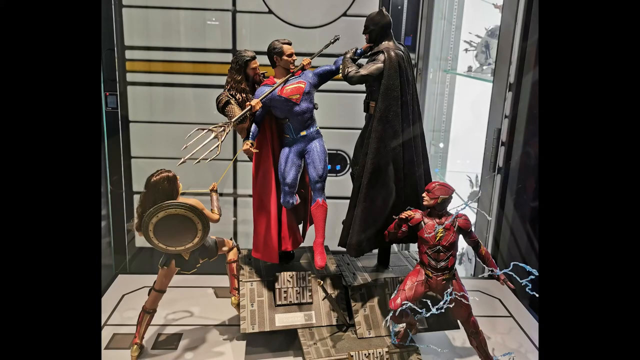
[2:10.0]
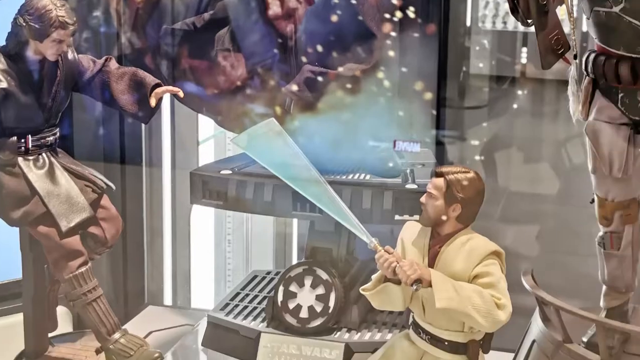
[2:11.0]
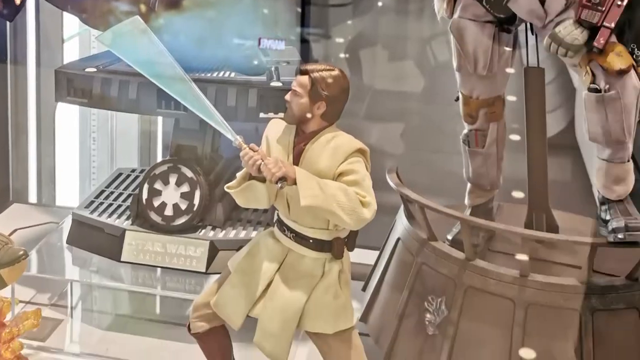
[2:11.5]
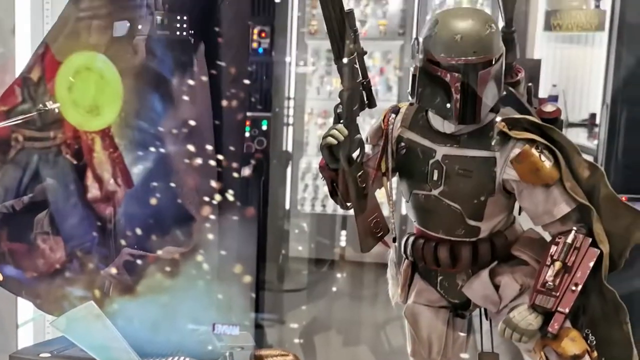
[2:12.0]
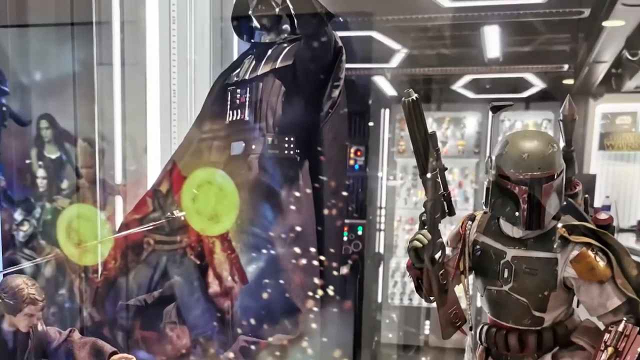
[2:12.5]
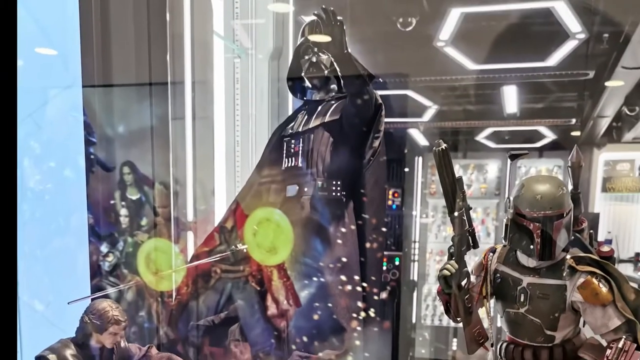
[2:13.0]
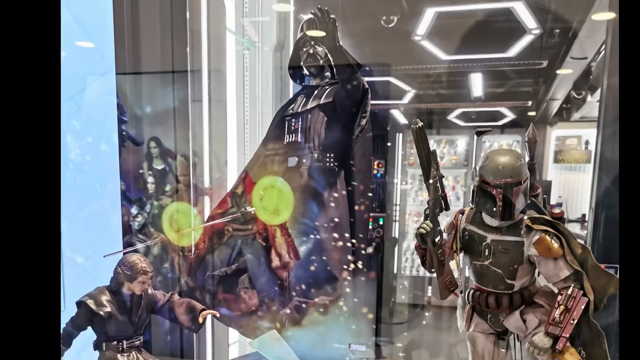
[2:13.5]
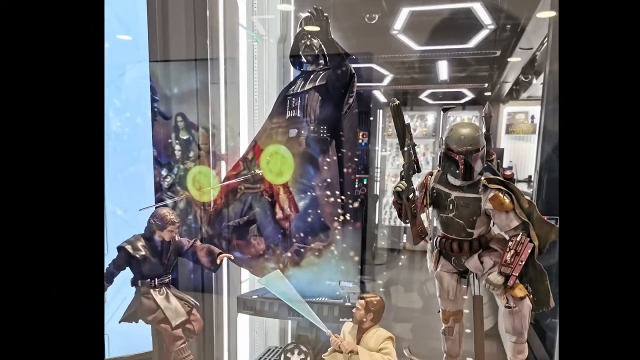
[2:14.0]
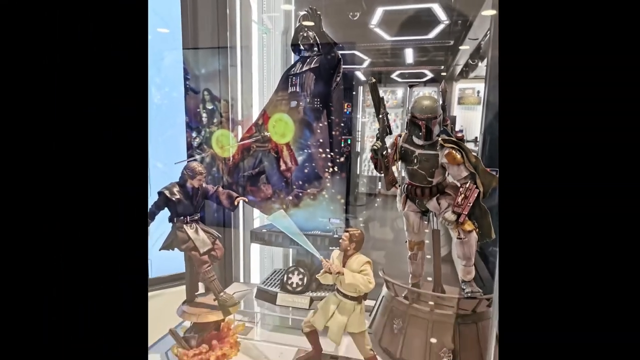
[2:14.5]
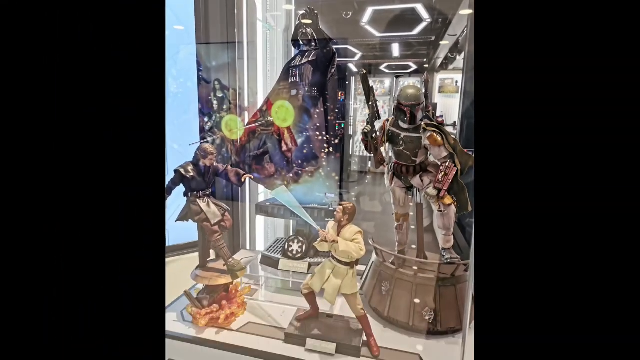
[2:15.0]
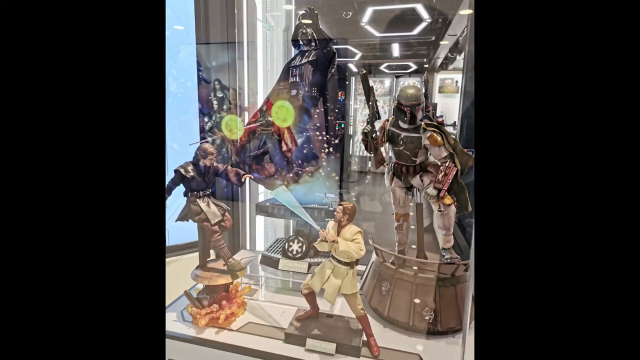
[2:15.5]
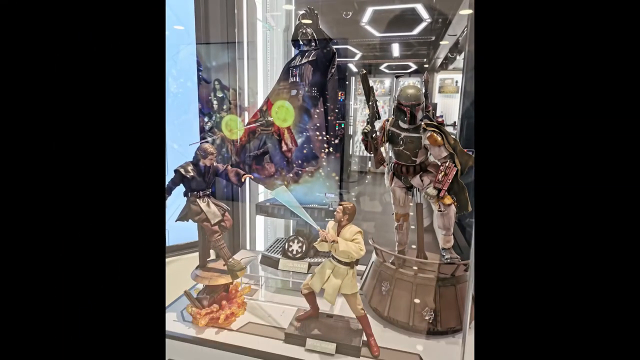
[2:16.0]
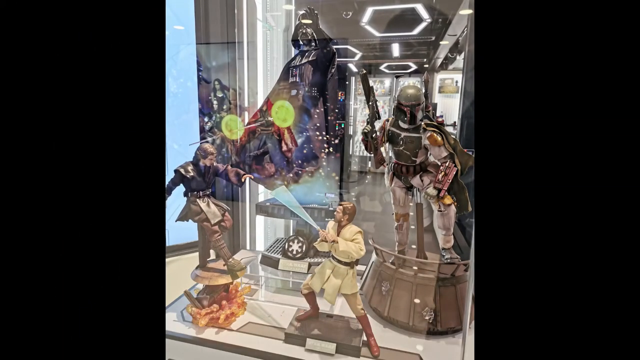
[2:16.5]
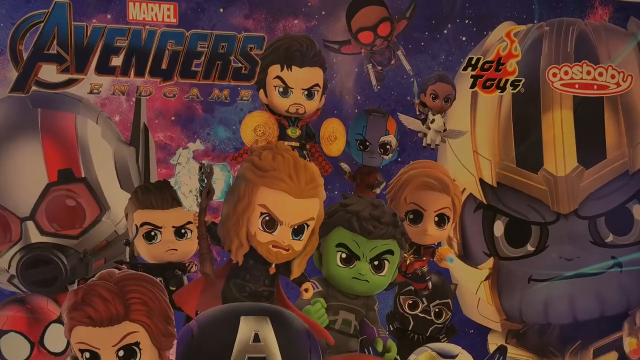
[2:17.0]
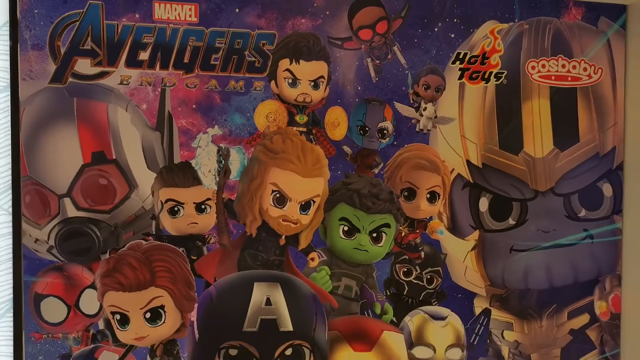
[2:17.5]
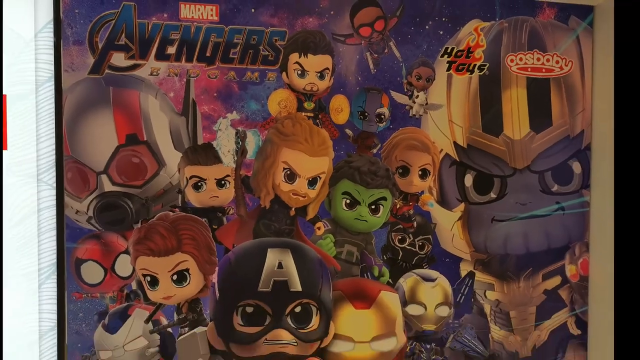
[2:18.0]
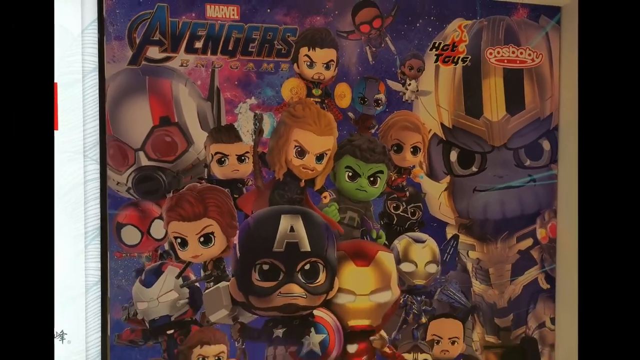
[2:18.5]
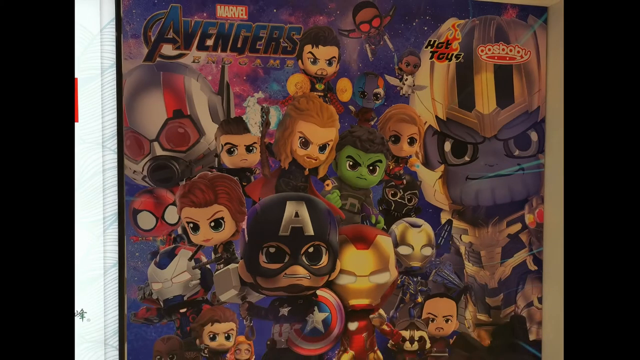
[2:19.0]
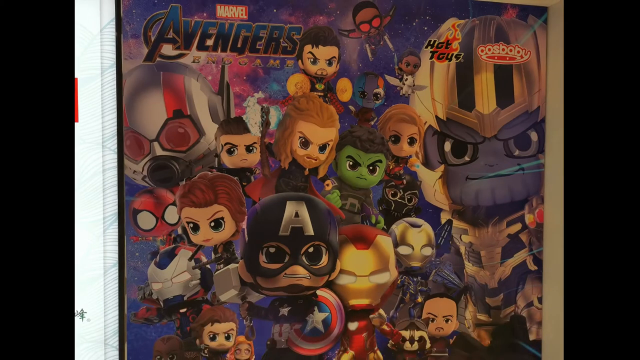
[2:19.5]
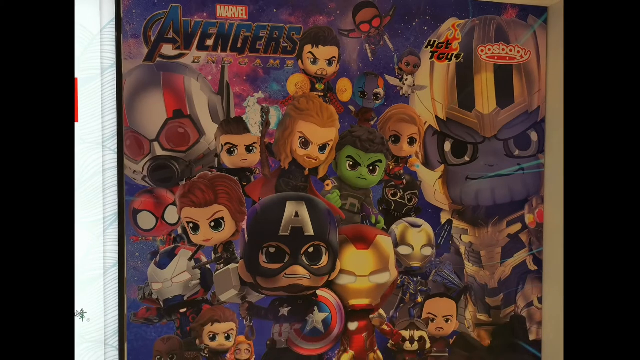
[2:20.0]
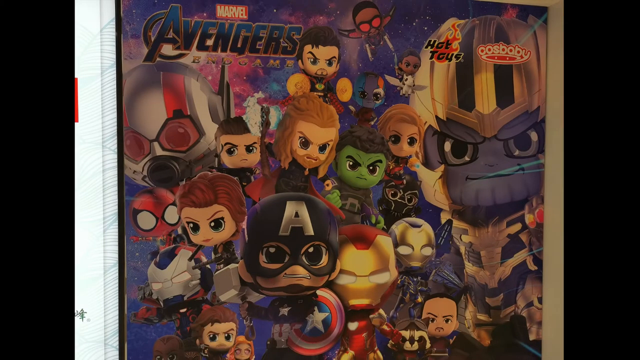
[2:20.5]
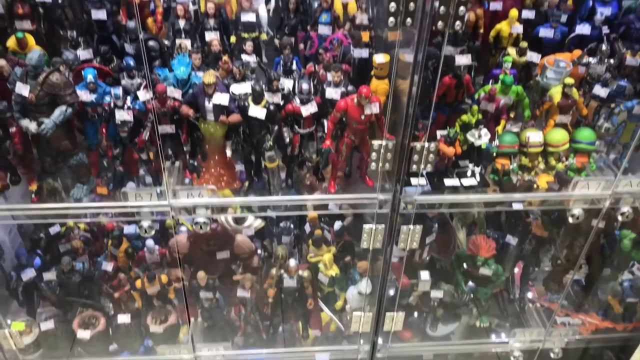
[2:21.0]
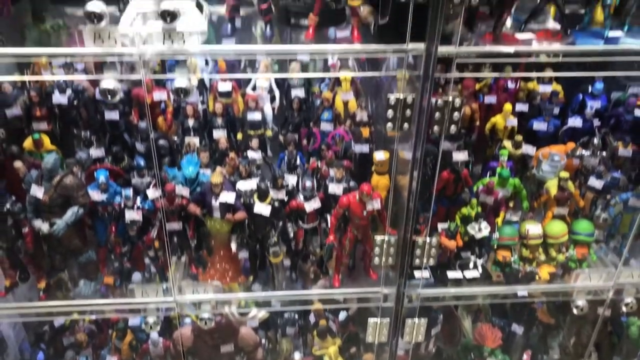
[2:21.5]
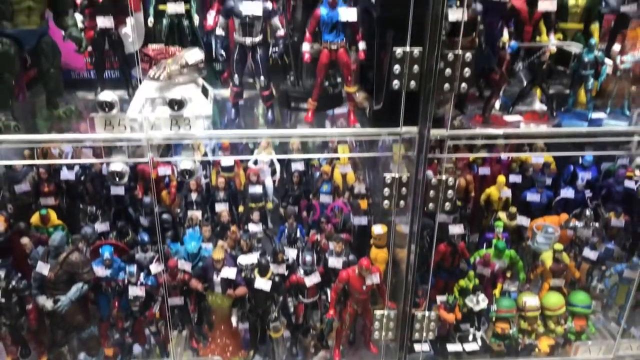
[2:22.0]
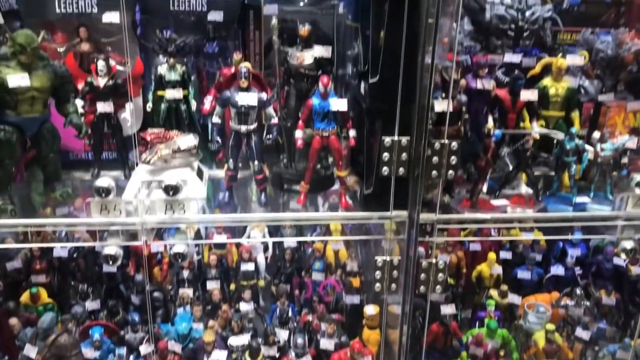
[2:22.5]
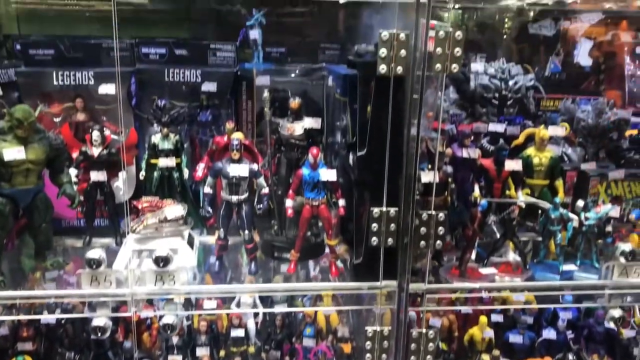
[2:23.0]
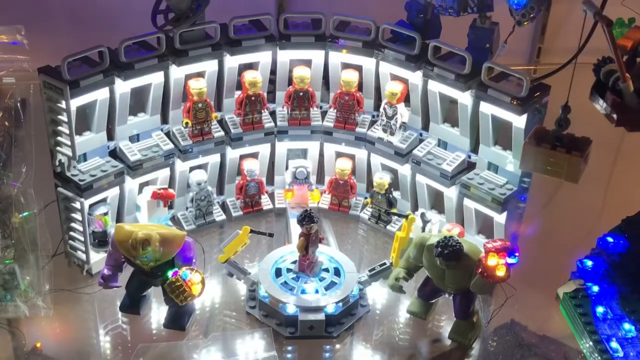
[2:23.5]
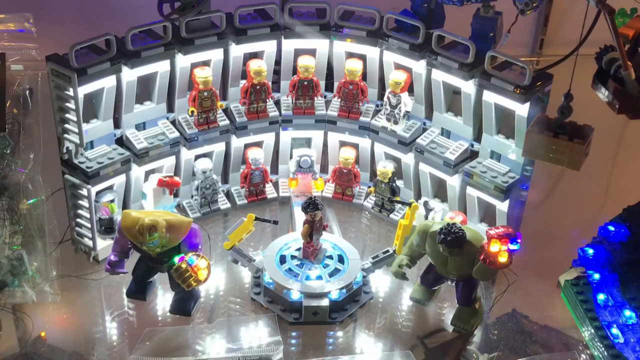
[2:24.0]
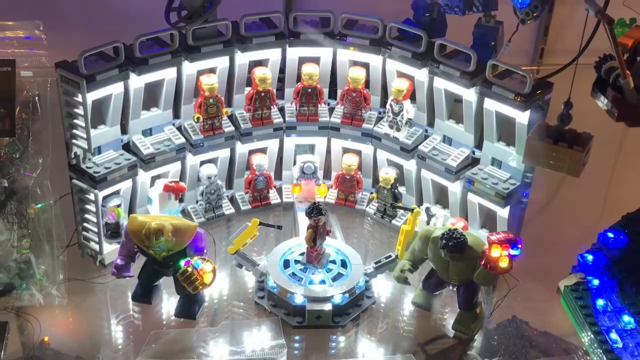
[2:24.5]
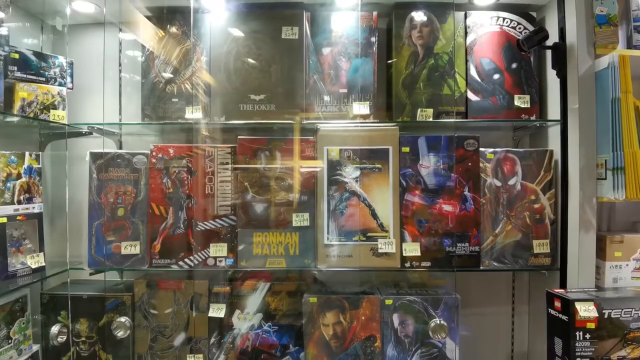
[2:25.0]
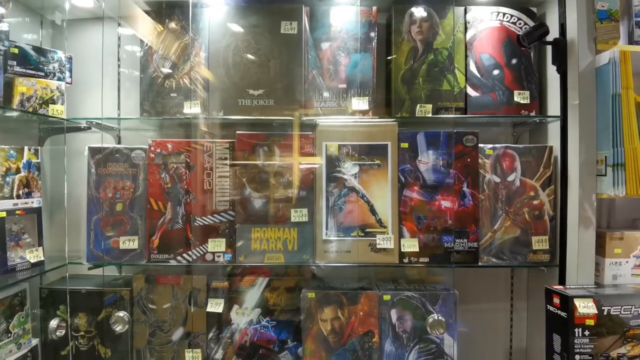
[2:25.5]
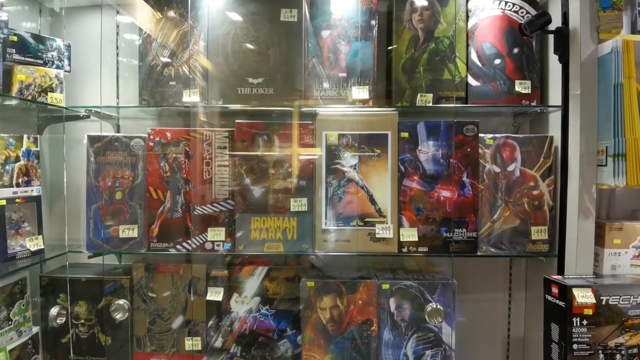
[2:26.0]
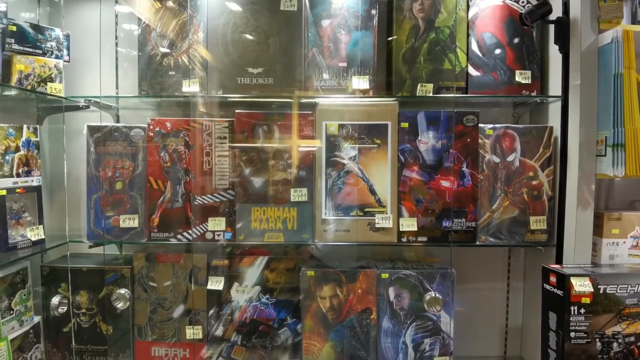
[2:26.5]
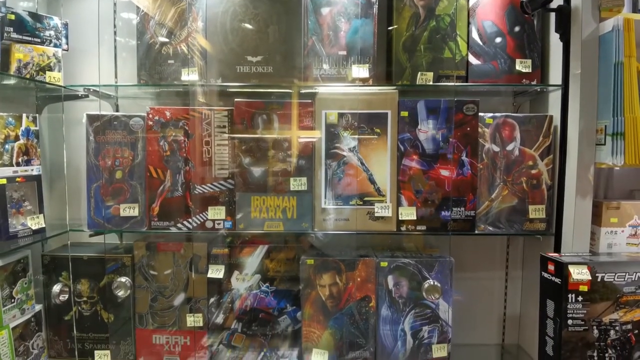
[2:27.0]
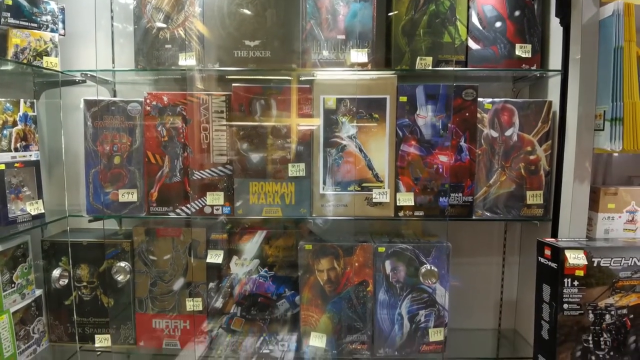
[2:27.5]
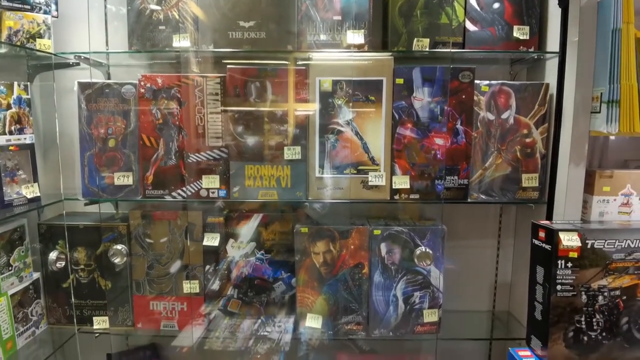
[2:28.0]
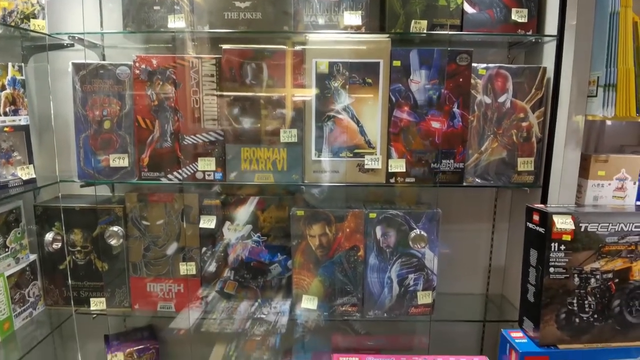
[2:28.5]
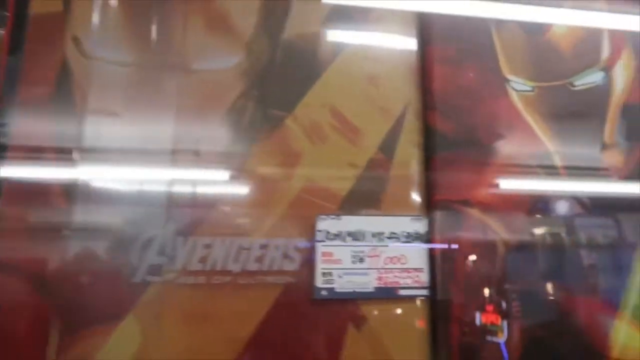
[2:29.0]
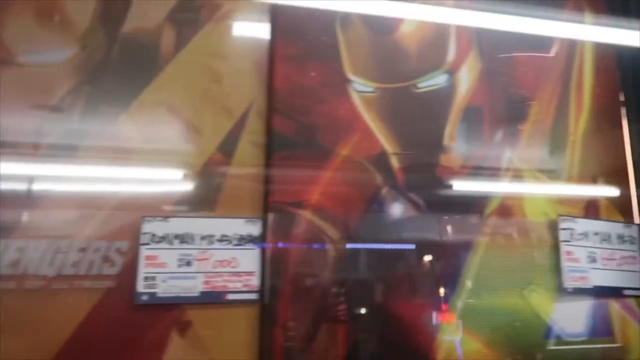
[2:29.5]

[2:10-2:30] The next photo shows Star Wars dioramas, figures and collectibles inside a display case, including Boba Fett, Kenobi fighting Anakin Skywalker on the Lava Planet, and a big Darth Vader figure in the background. The video then transitions to what seems to be an Ooze Baby poster, and then to another photo showing more display cases and glass cases of Marvel Legends figures from the Marvel Legends line, all with price tags on them. There is also a Lego diorama and Lego display including all of Tony Stark's armors. It then transitions to a video of a display case with more collectible boxed figures from the Avengers.